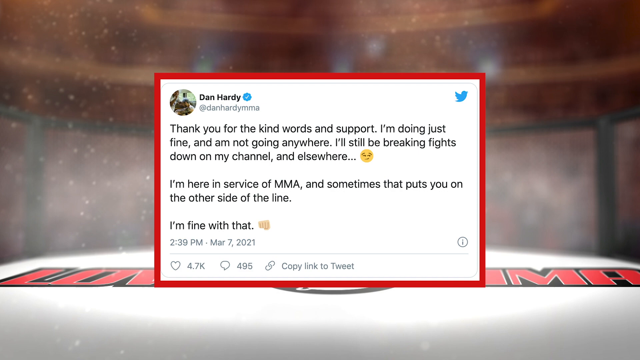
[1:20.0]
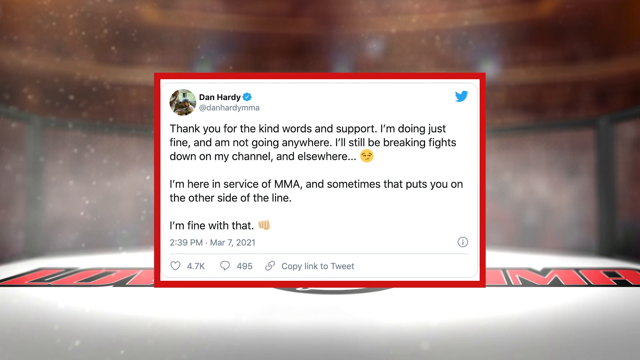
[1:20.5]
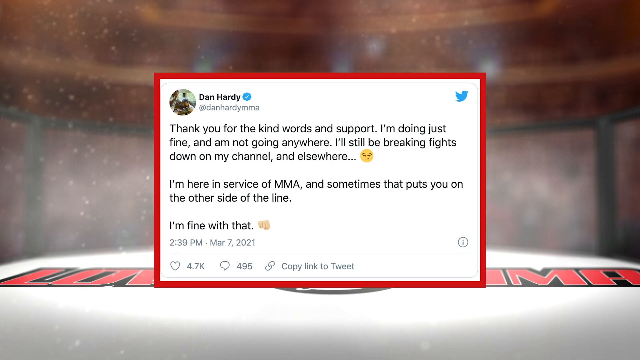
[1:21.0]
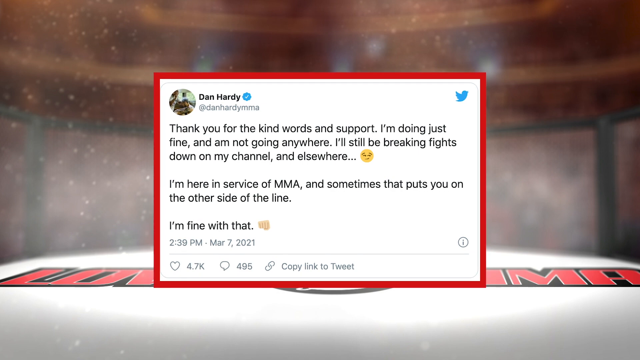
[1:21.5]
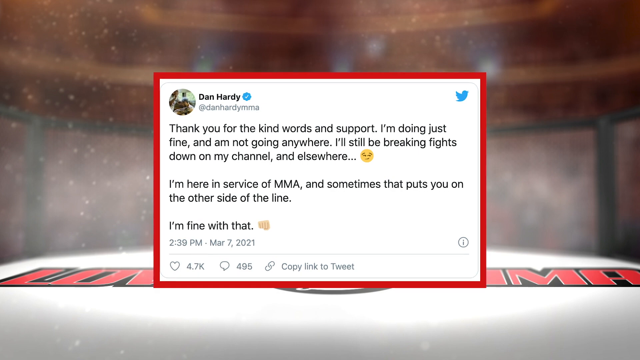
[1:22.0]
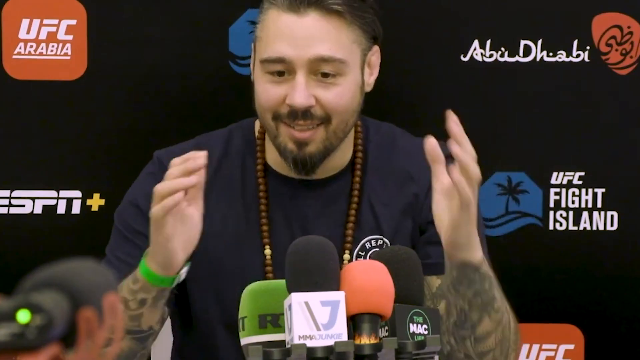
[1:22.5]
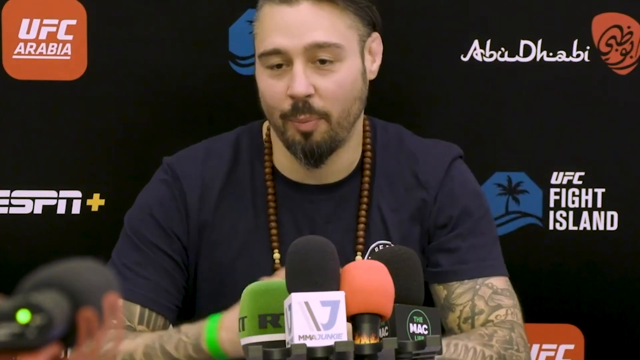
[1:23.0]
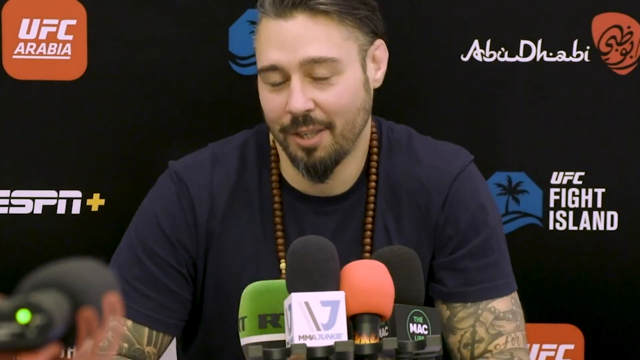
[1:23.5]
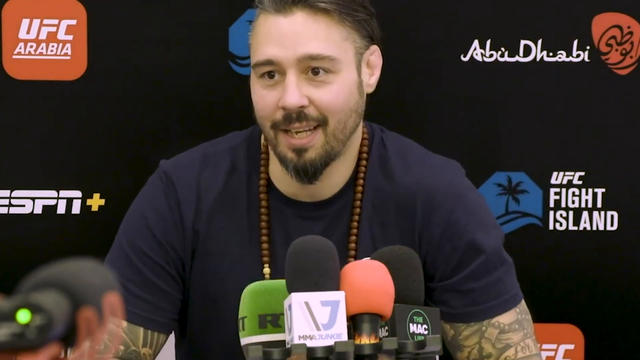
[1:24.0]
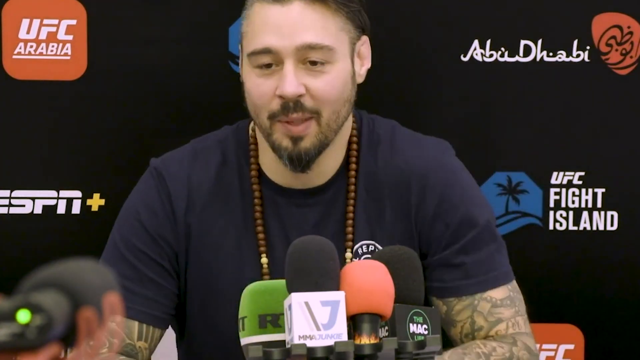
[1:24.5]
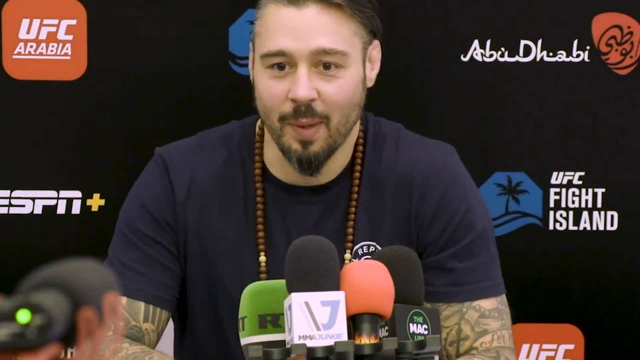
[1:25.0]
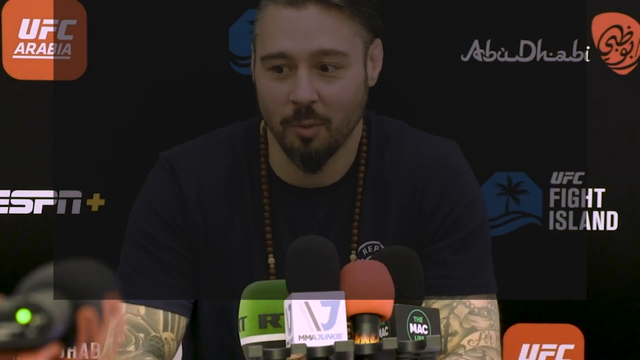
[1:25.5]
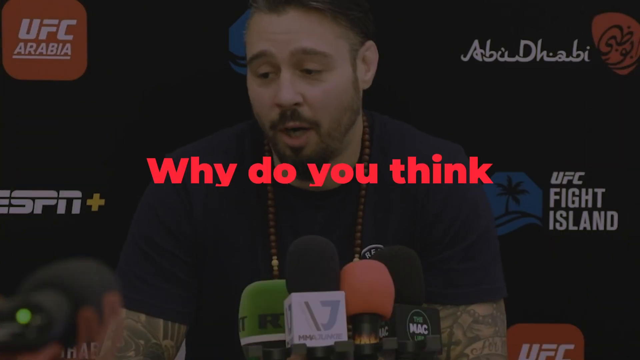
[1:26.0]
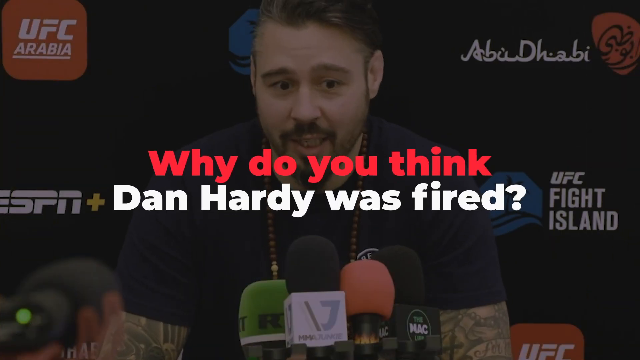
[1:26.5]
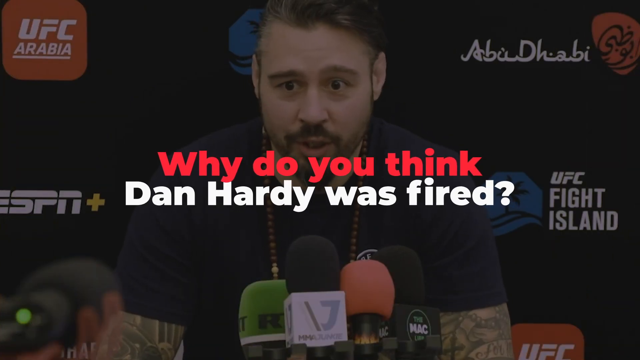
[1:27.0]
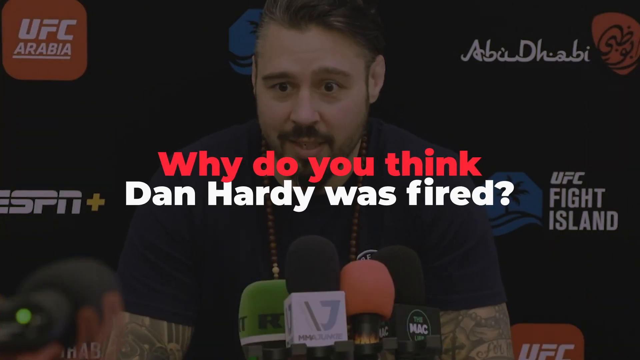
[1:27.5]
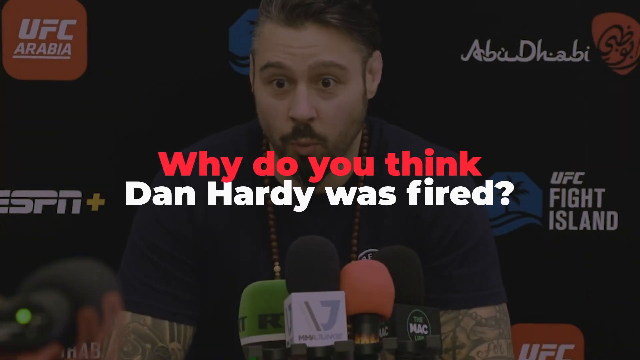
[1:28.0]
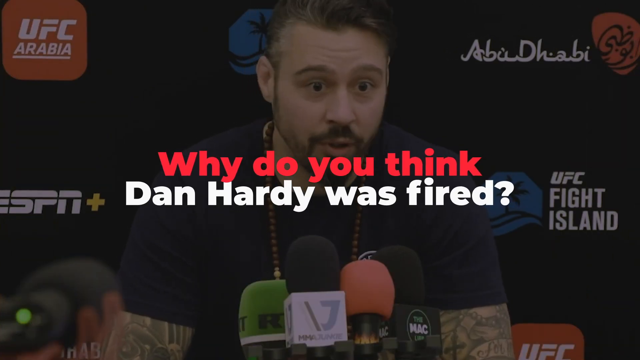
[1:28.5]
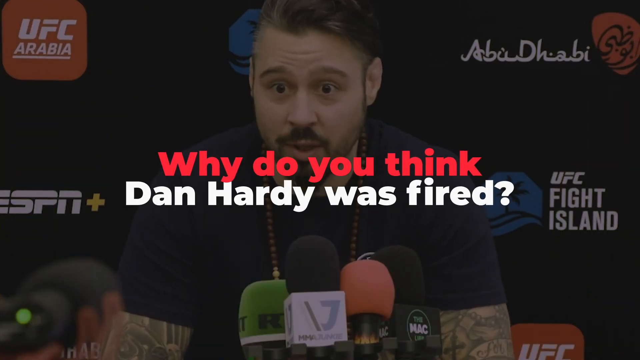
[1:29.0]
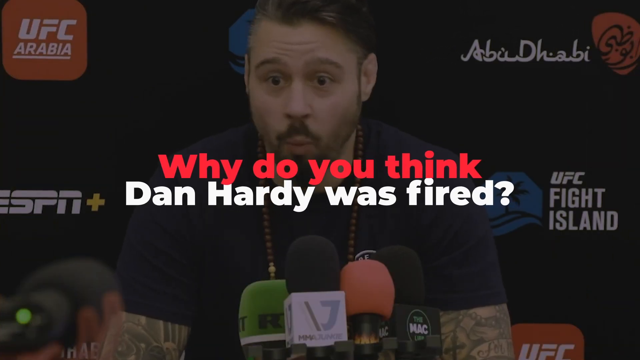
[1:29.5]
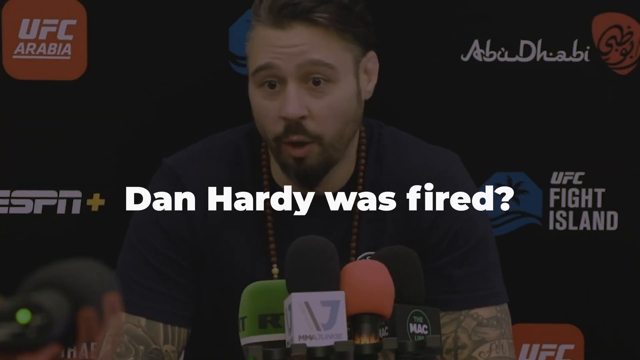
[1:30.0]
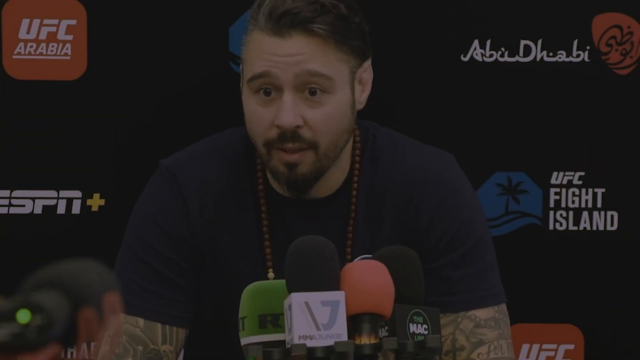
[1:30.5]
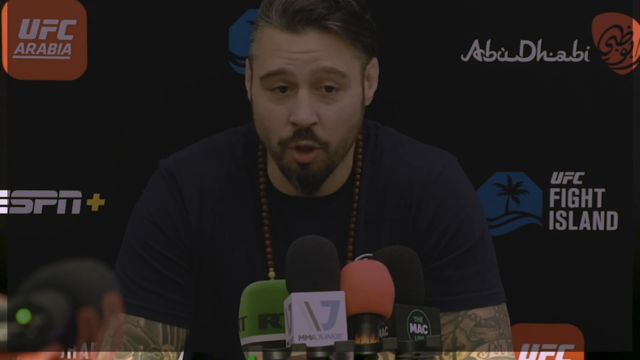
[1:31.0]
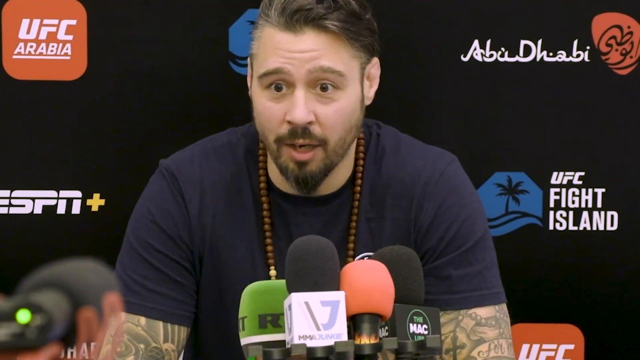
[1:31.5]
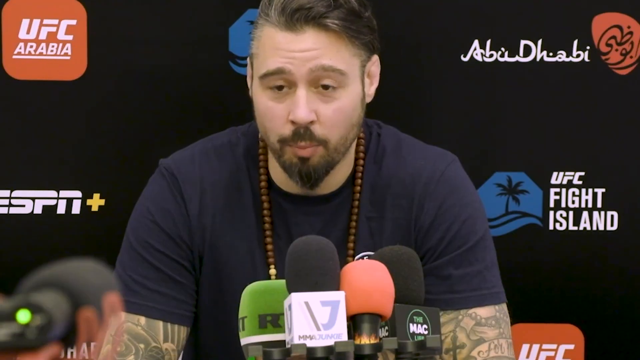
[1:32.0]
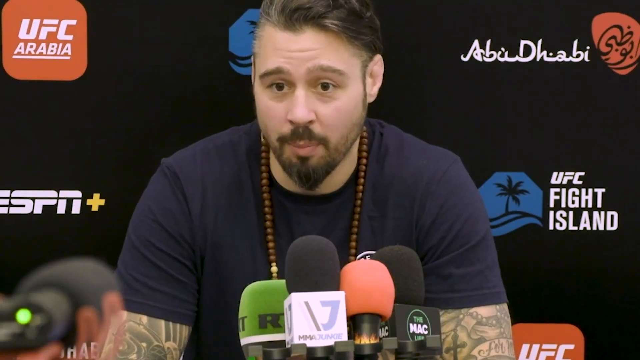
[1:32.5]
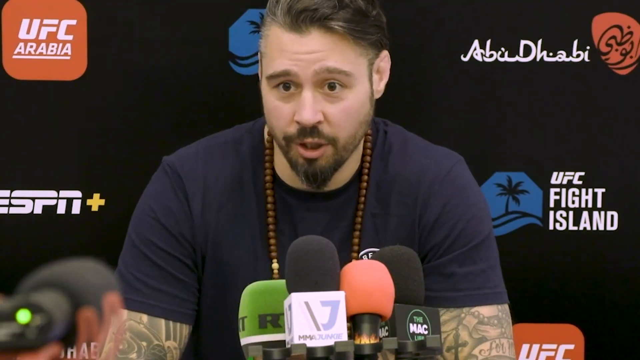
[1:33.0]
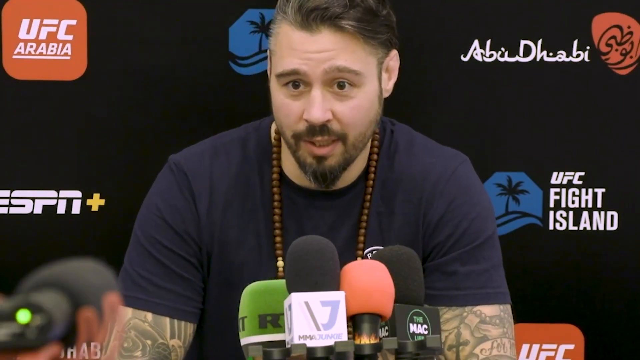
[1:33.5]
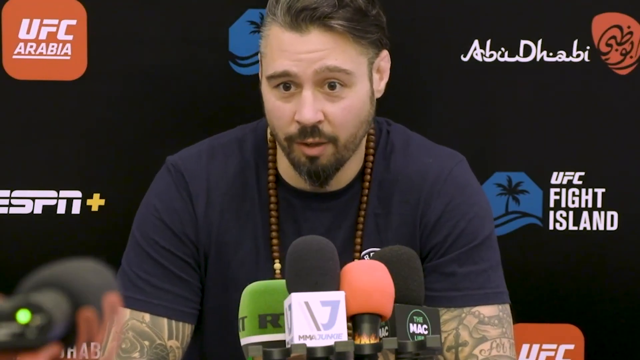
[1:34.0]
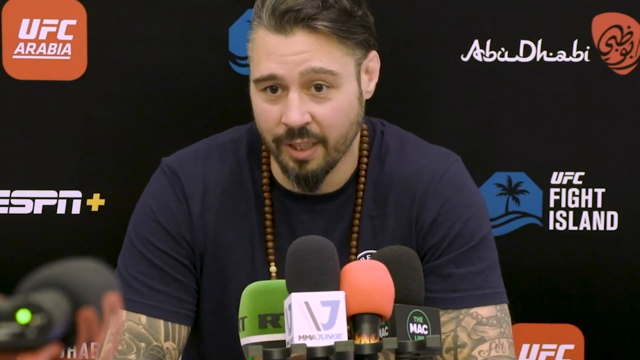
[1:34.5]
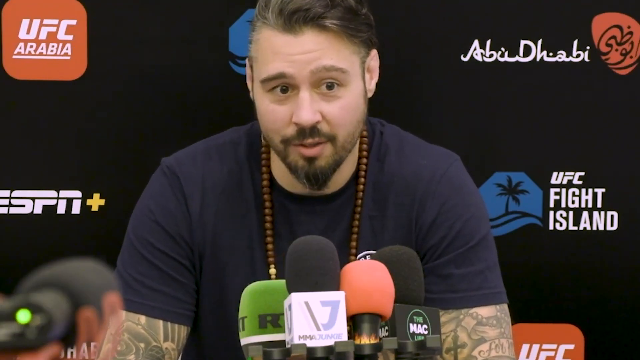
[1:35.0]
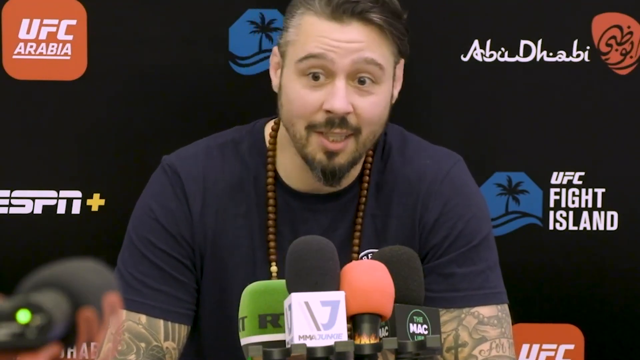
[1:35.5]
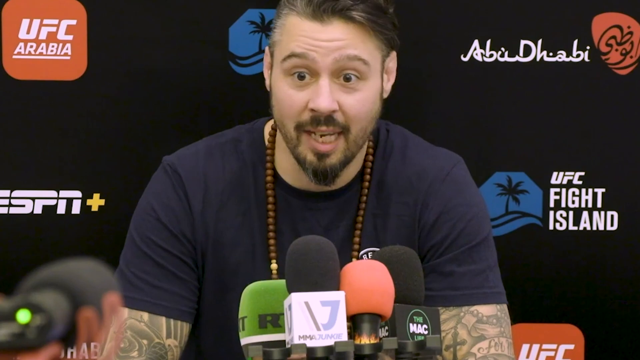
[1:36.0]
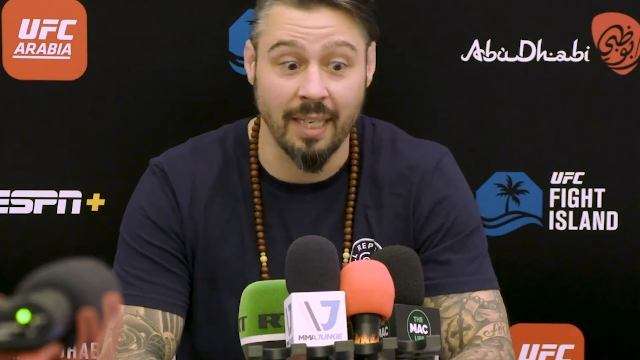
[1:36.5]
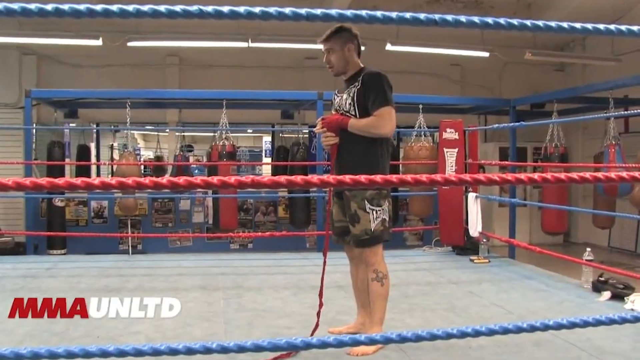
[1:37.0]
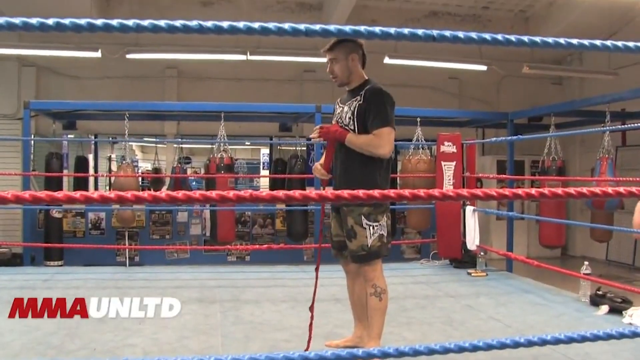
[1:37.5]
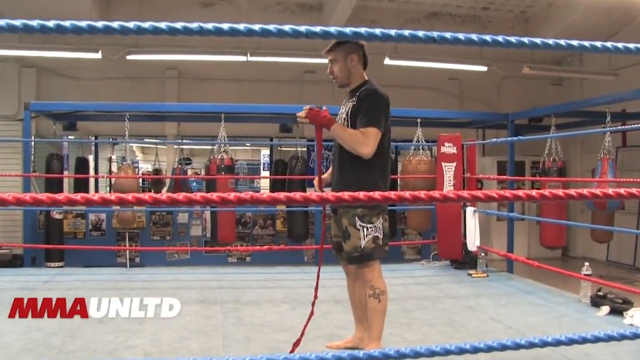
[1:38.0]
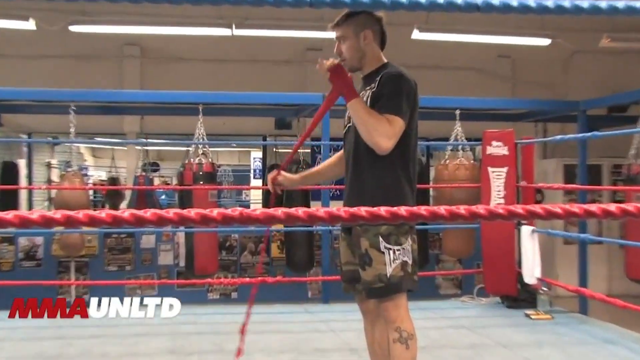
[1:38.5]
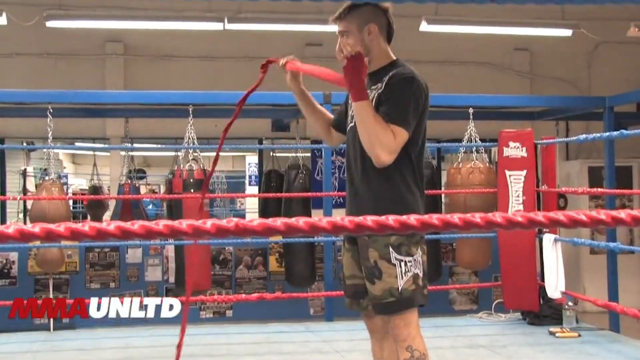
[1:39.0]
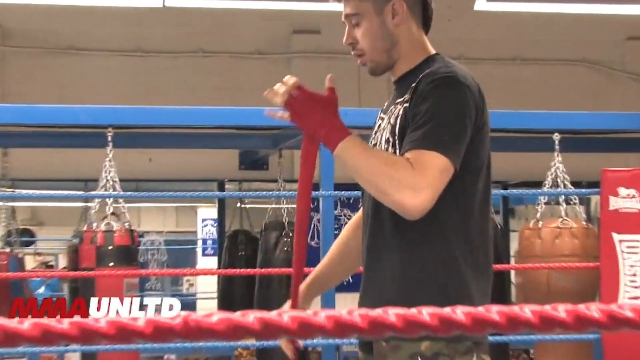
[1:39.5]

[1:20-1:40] A tweet by Dan Hardy on Twitter is on screen, saying "Thank you for the kind words and support. I'm doing just fine and not going anywhere. I'll still be breaking fights down on my channel and elsewhere. I'm here in service of the MMA, and sometimes that puts you on the other side of the line. I'm fine with that." The video then cuts to a sports commentator sitting at a desk. He wears a short-sleeved black shirt and has brown hair and a beard. The black screen behind him has logos for UFC Arabia, ESPN+, Abu Dhabi, and UFC Fight Island. The screen darkens and a caption appears above the man, asking "Why do you think Dan Hardy was fired?" The screen lightens again and the caption disappears as the commentator continues to speak. The video then cuts to an image of a man inside a fighting ring. He wears a black shirt and short camouflage shorts, has short brown hair, and holds a microphone.